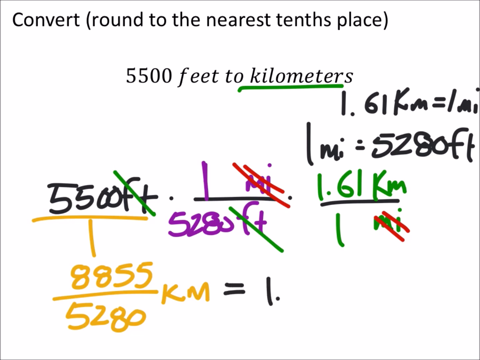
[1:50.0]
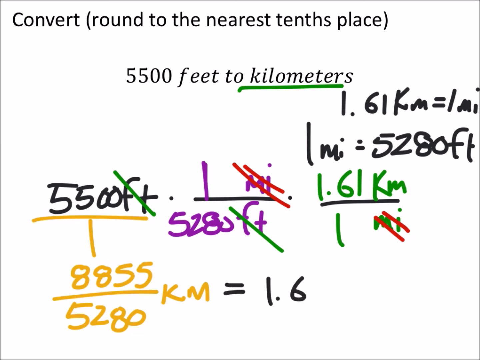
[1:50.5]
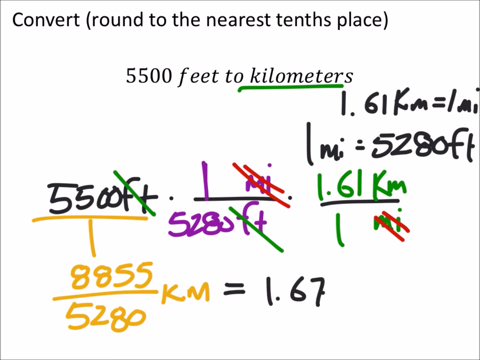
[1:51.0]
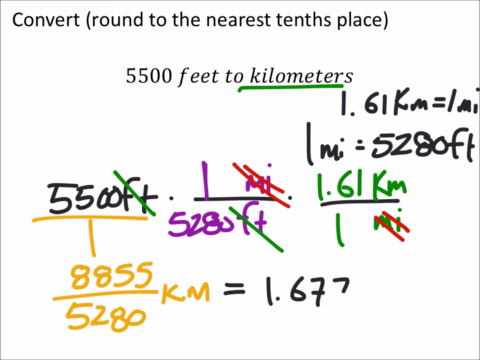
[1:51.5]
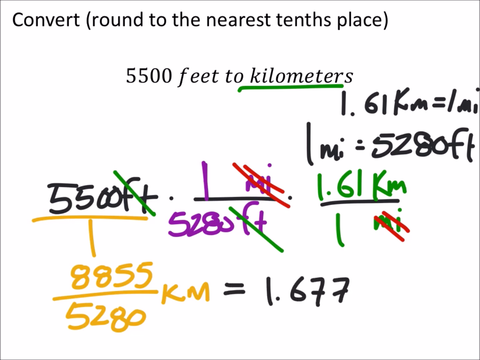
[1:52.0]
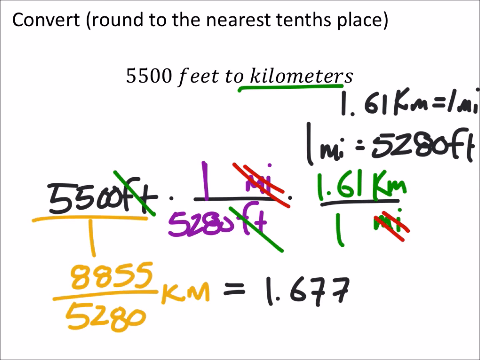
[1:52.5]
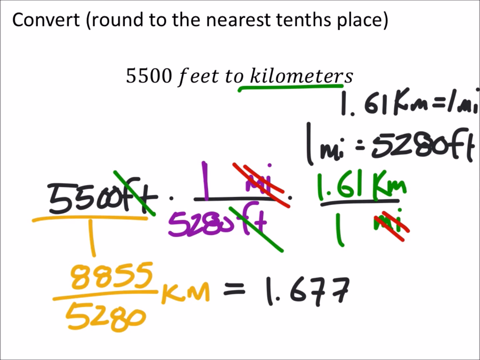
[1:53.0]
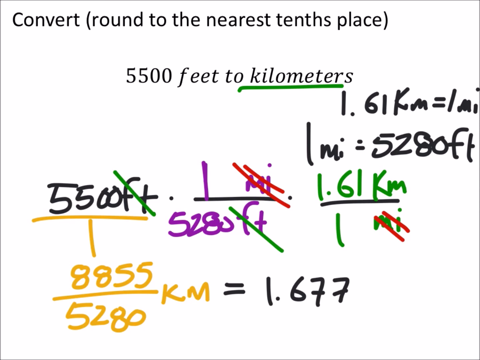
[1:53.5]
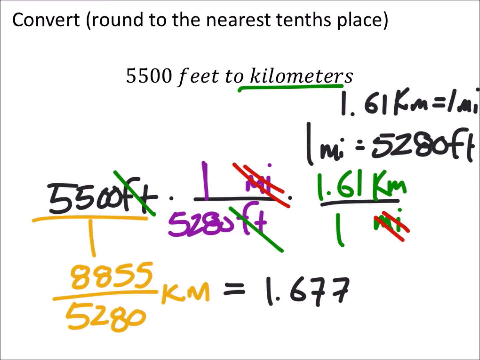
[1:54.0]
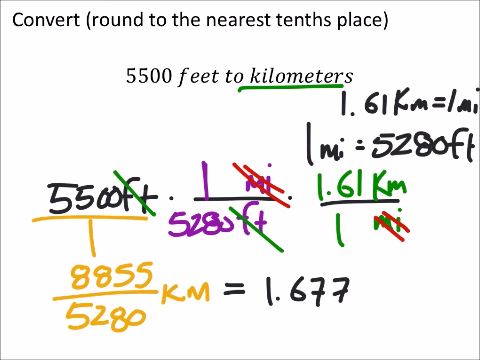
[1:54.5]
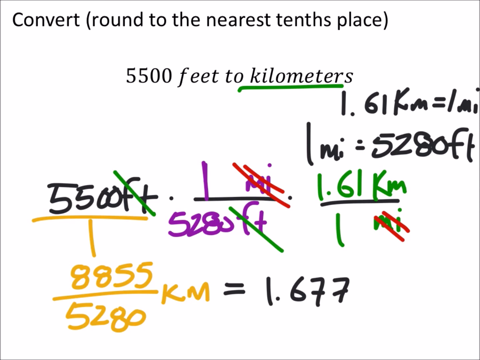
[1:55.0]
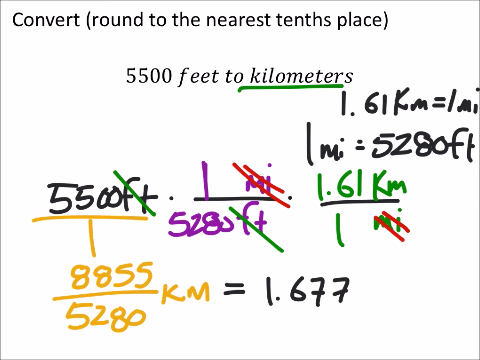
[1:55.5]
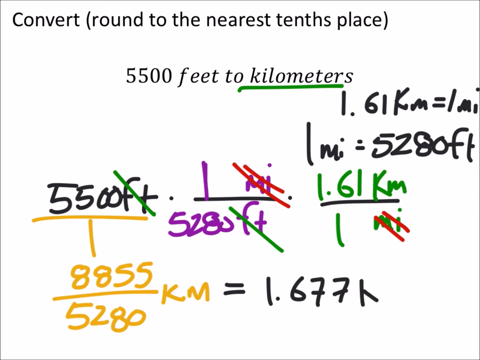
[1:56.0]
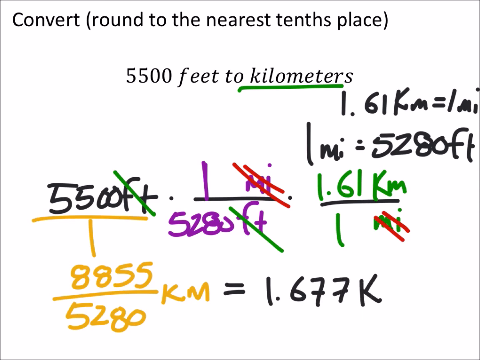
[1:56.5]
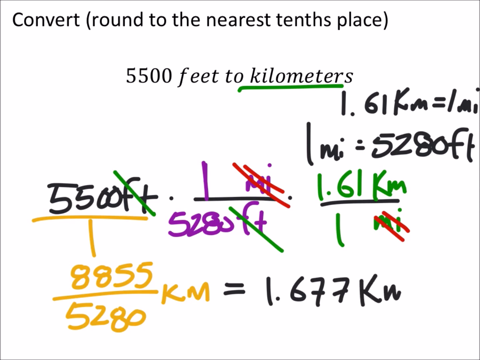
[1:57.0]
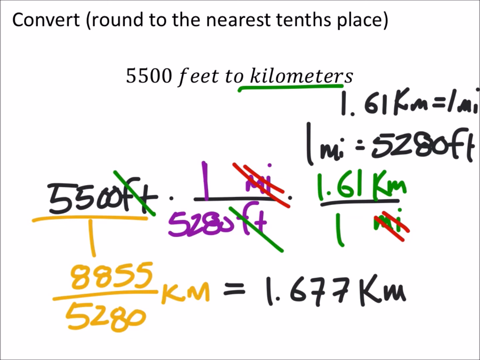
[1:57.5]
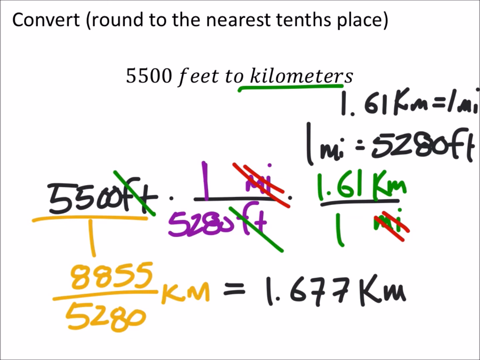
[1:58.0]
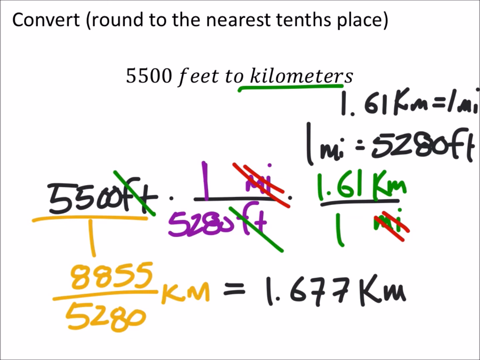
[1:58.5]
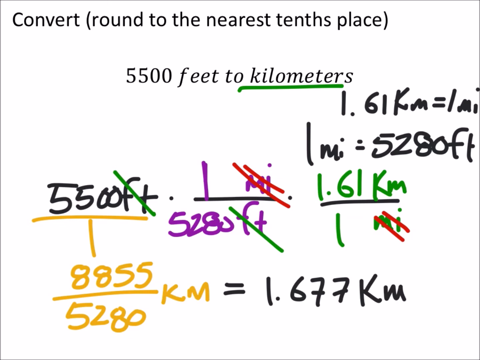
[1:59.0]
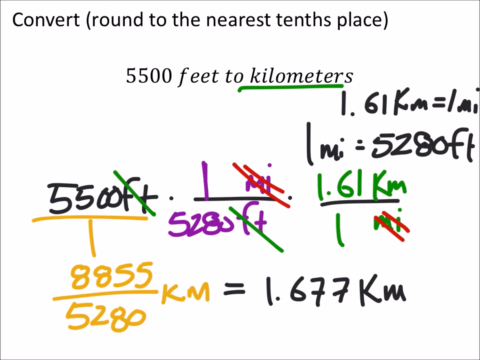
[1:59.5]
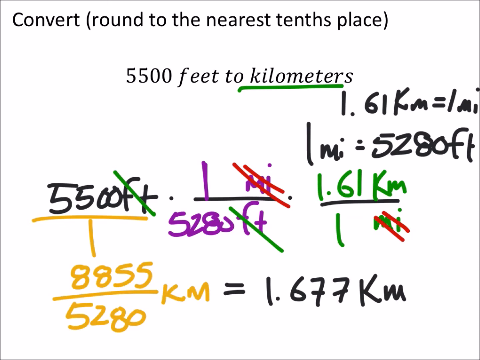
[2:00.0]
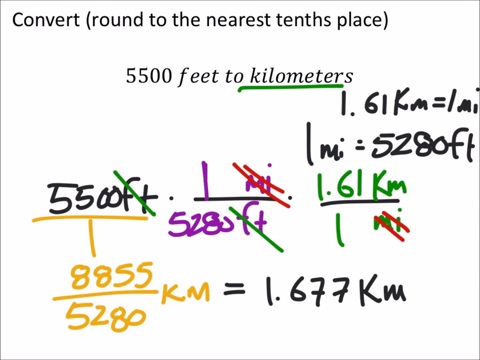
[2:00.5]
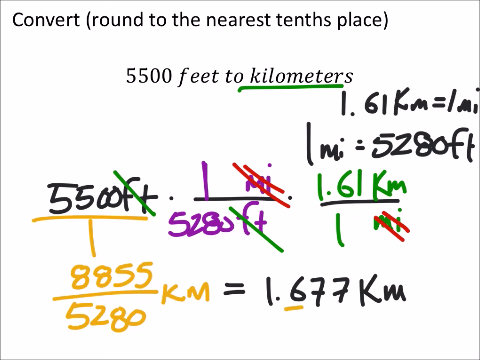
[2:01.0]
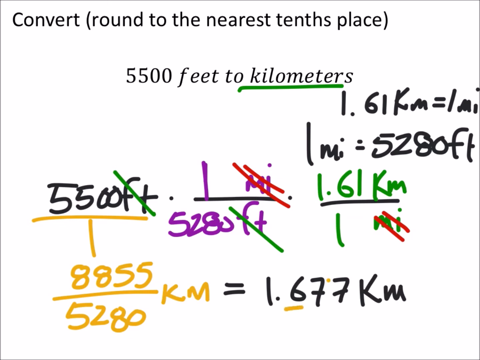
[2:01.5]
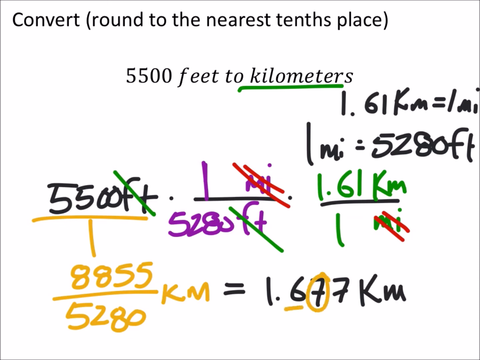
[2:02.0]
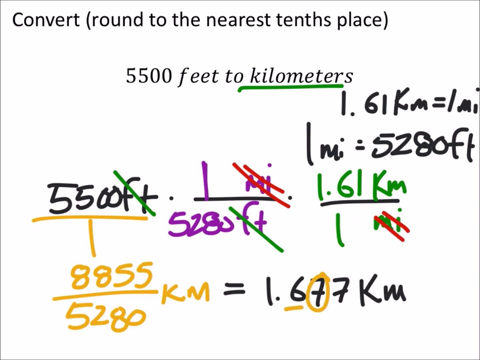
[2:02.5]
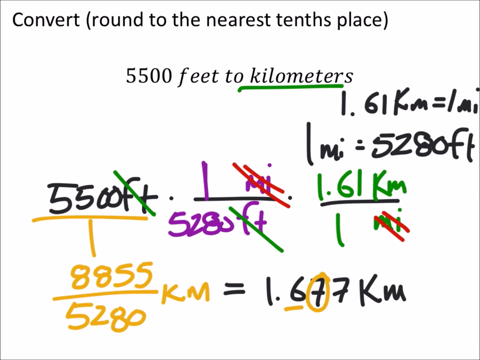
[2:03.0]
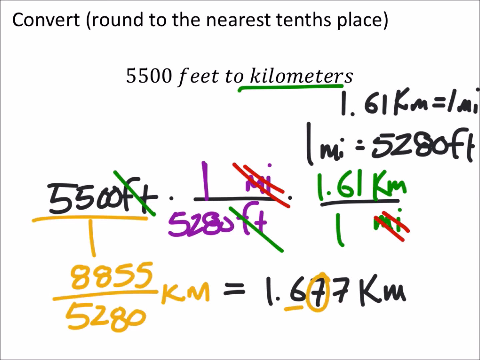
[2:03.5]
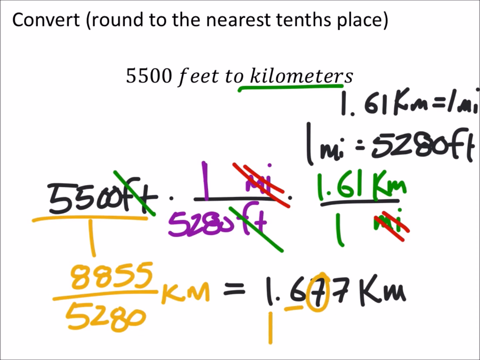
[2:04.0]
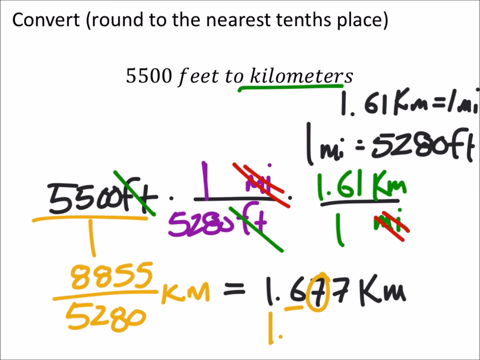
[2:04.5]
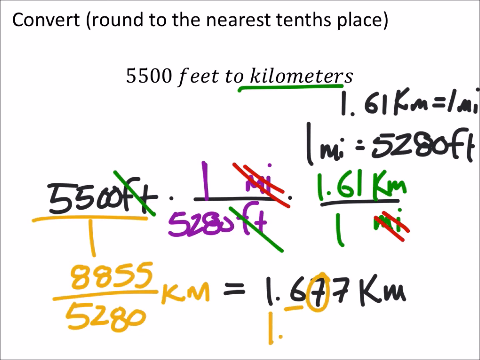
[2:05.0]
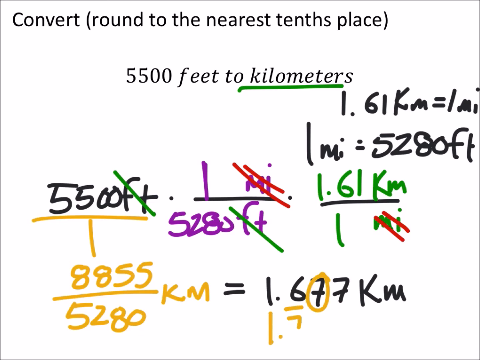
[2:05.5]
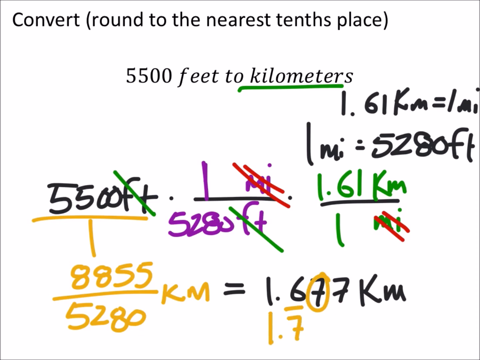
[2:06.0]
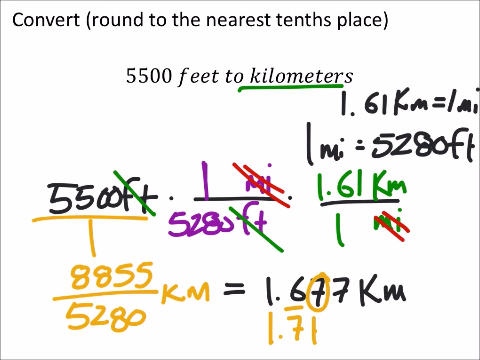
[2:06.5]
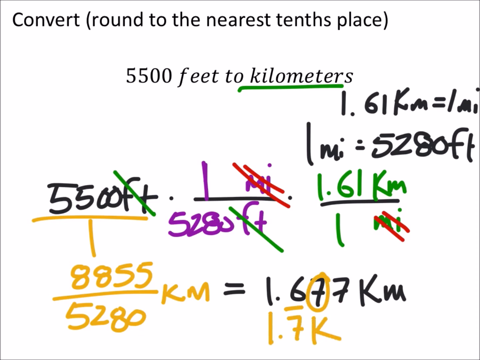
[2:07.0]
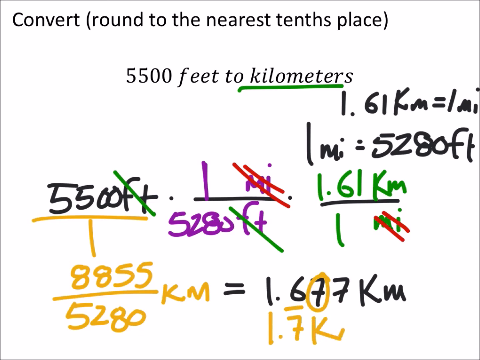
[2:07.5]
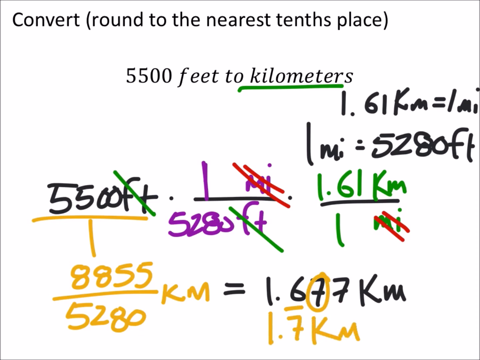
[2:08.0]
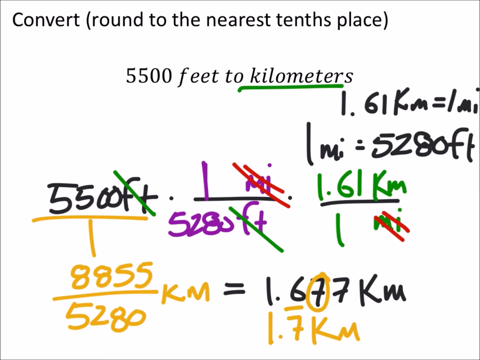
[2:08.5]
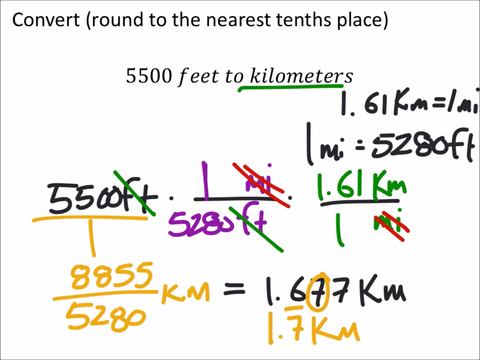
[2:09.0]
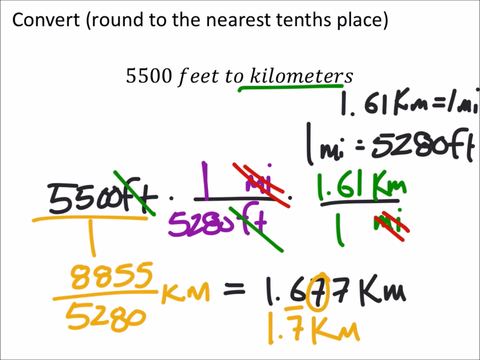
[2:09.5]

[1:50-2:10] Under the 5,500 feet, a table is drawn, and under the table 8,855 kilometers divided by 5,280 kilometers gives 1.677 kilometers. The first 7 is circled, and the result then becomes 1.7 kilometers.